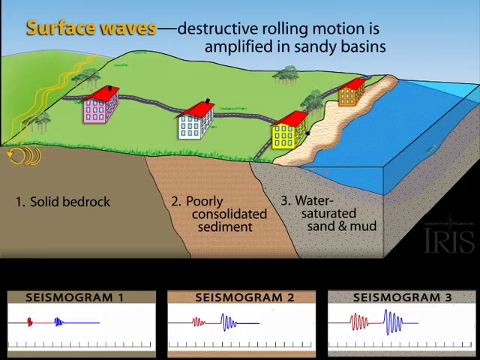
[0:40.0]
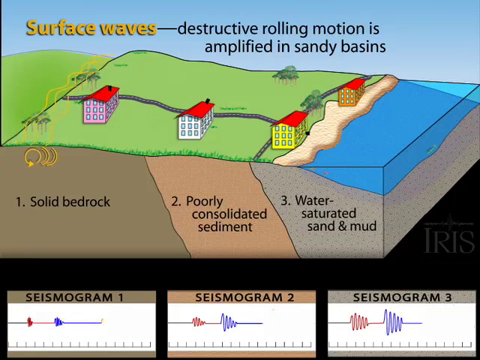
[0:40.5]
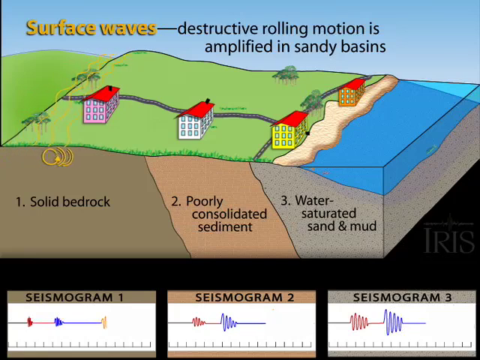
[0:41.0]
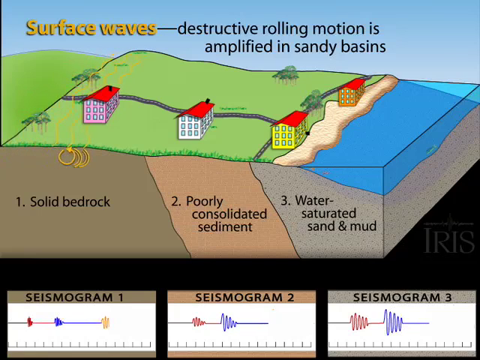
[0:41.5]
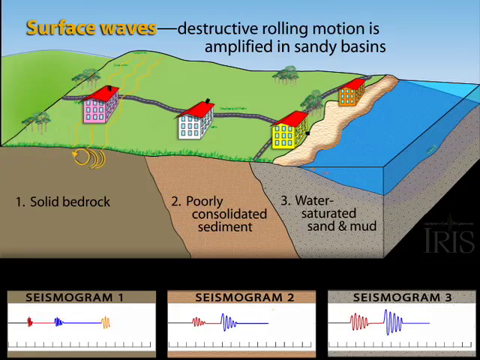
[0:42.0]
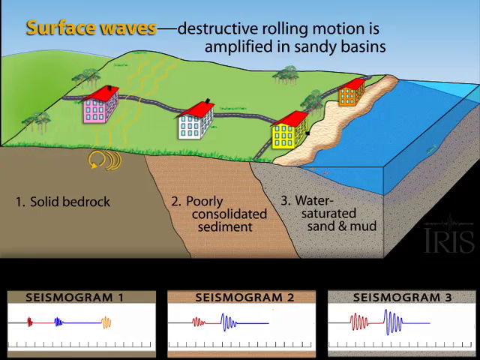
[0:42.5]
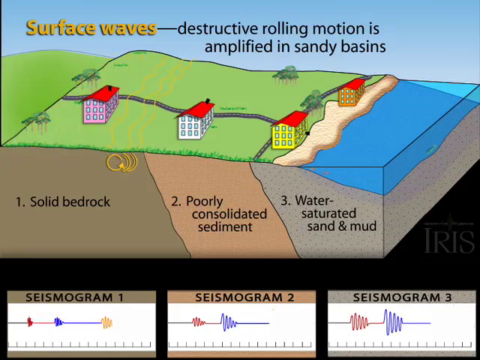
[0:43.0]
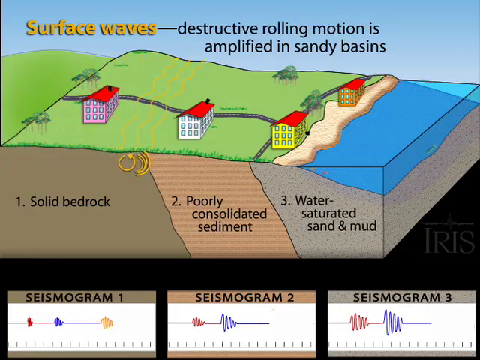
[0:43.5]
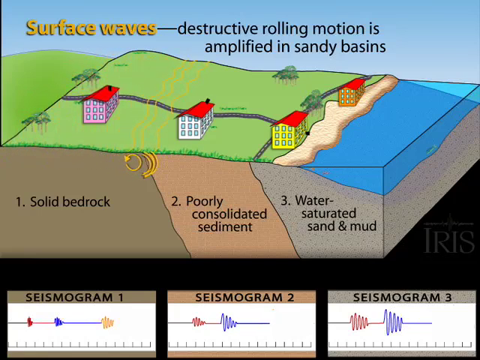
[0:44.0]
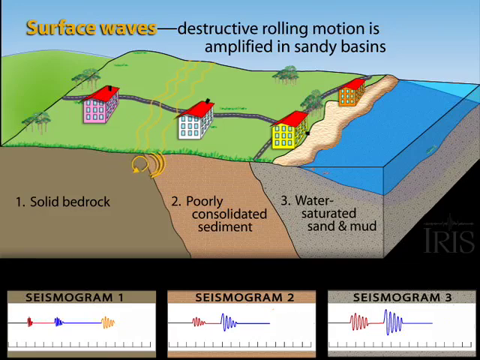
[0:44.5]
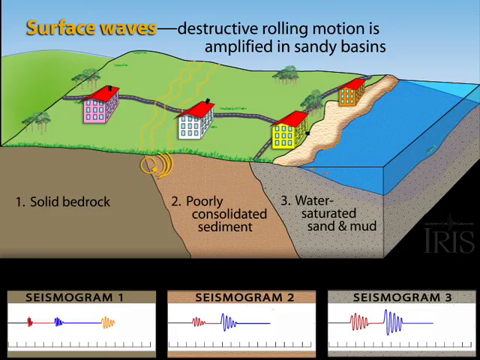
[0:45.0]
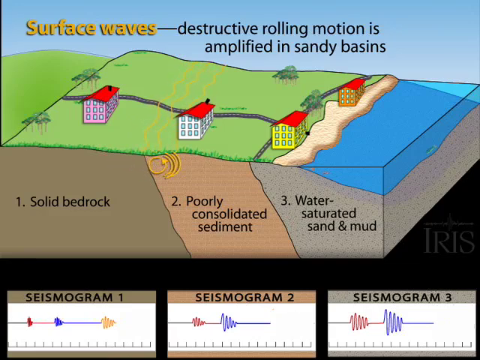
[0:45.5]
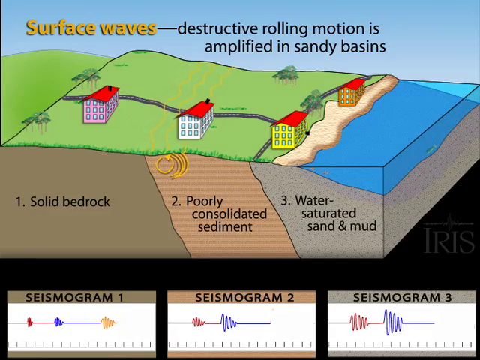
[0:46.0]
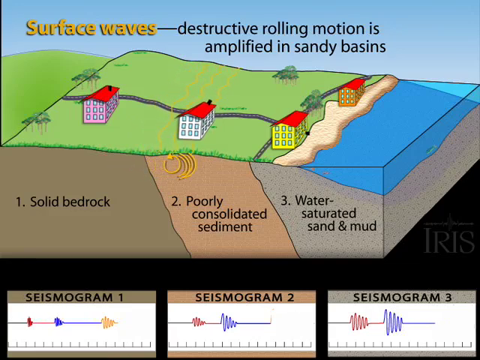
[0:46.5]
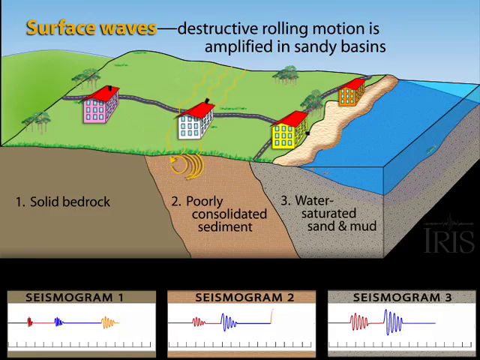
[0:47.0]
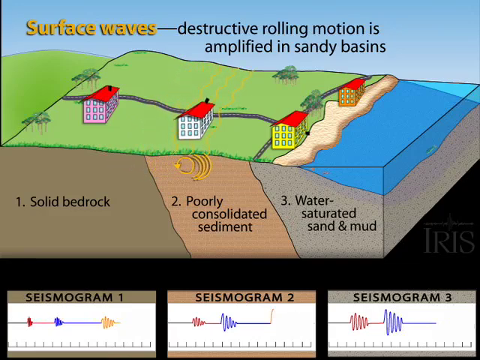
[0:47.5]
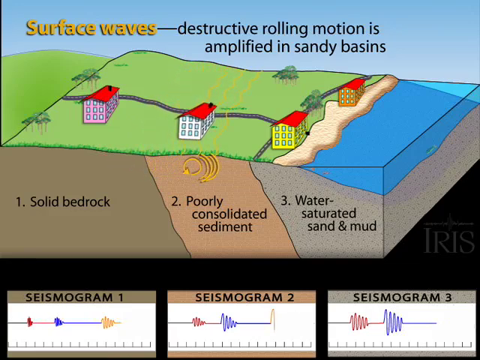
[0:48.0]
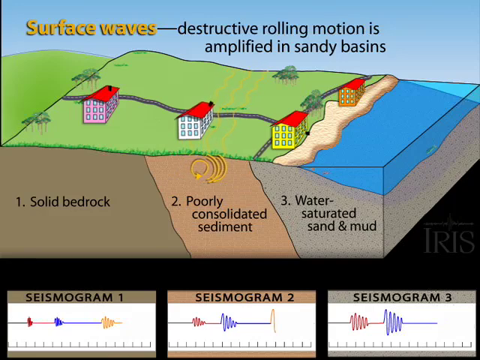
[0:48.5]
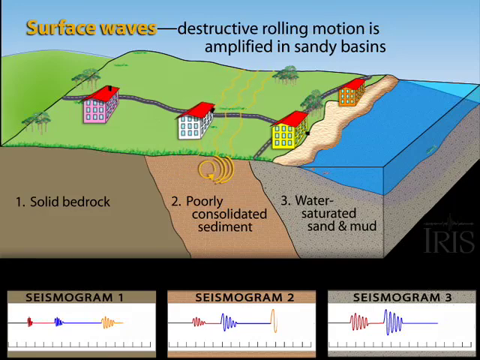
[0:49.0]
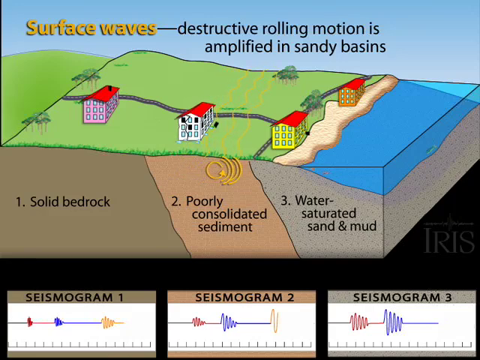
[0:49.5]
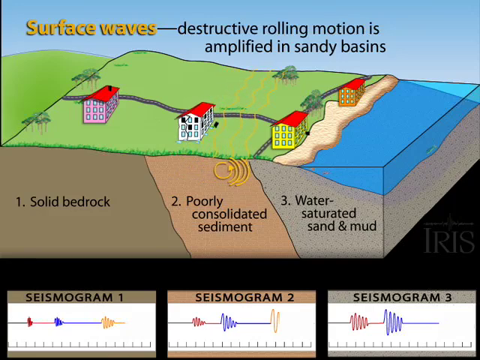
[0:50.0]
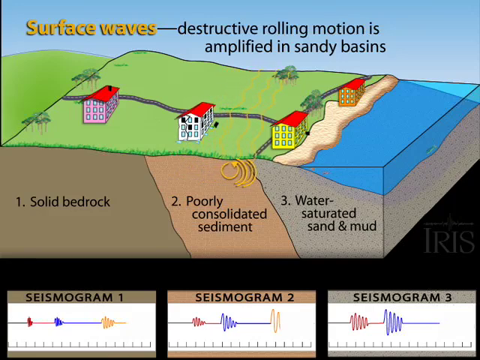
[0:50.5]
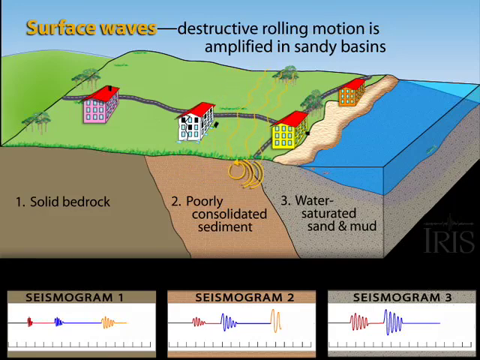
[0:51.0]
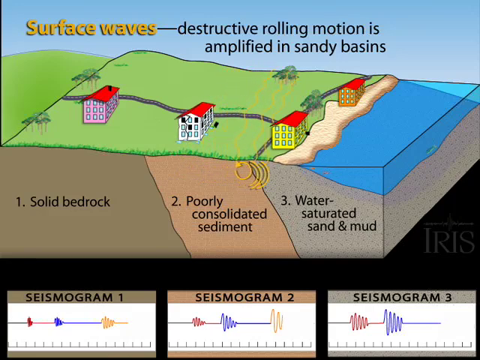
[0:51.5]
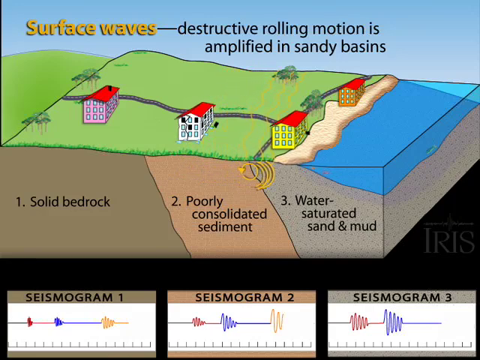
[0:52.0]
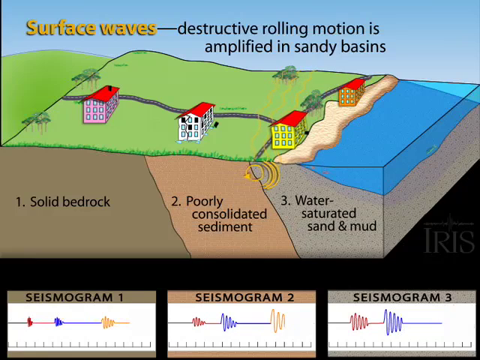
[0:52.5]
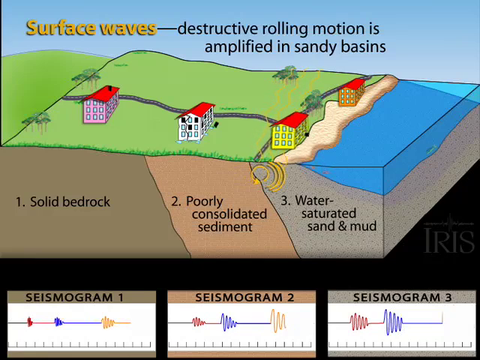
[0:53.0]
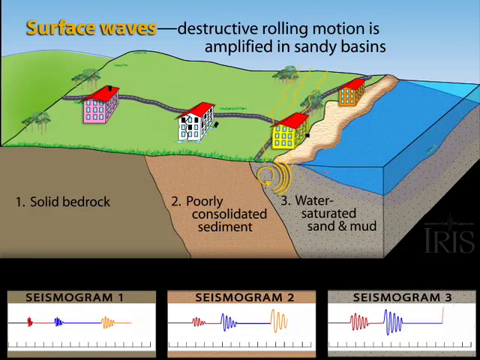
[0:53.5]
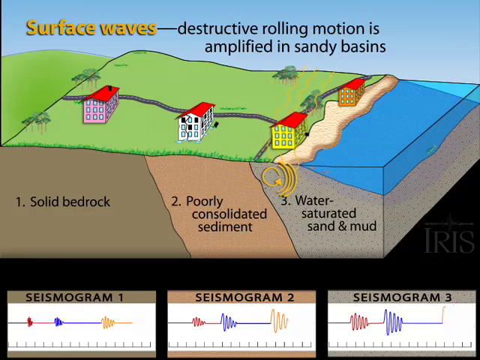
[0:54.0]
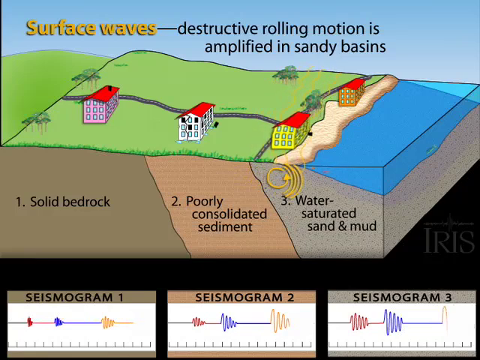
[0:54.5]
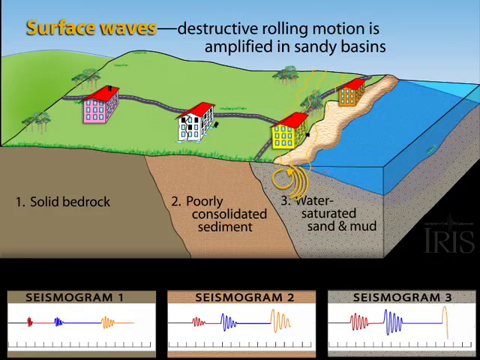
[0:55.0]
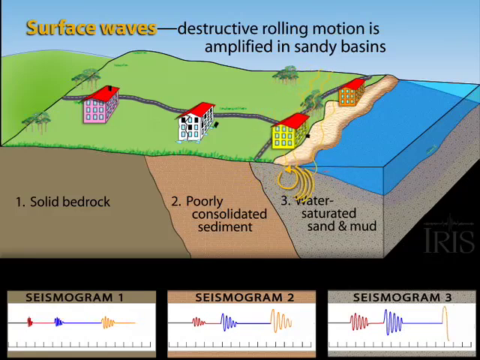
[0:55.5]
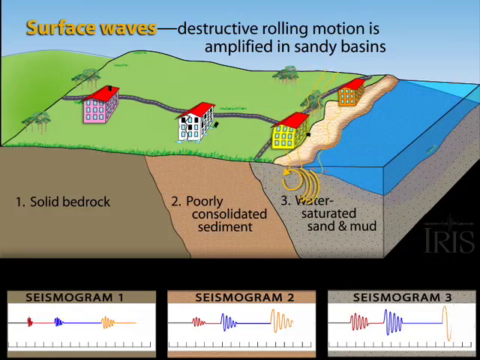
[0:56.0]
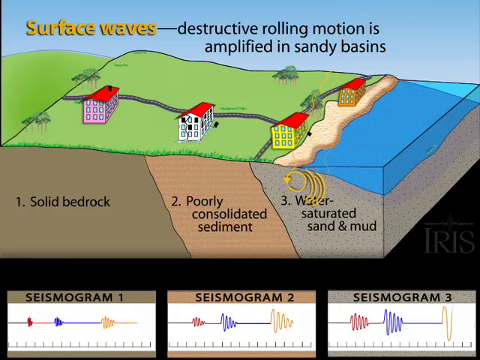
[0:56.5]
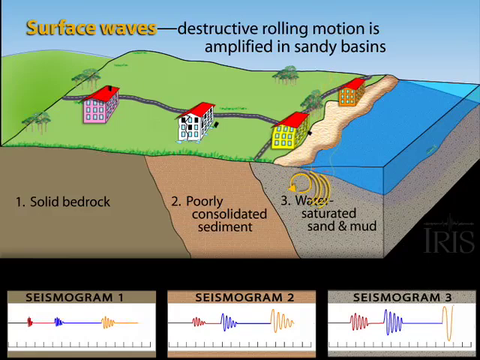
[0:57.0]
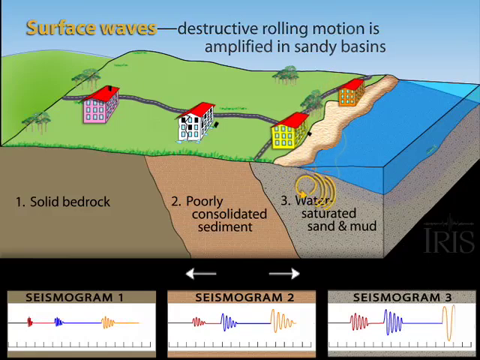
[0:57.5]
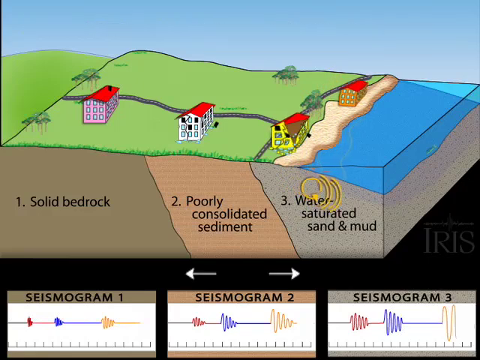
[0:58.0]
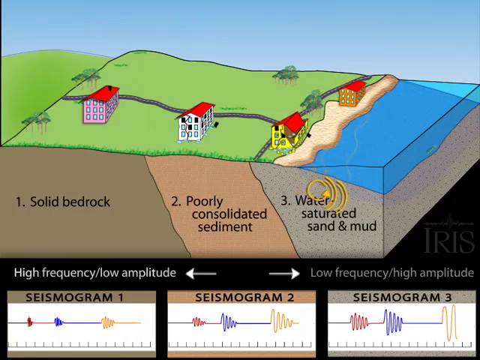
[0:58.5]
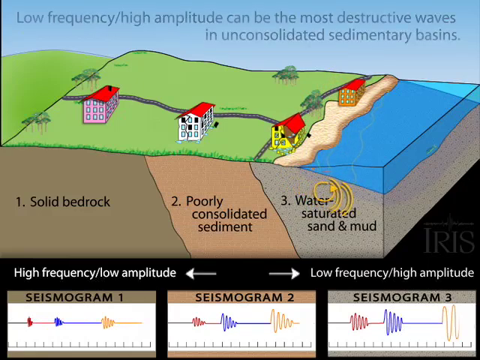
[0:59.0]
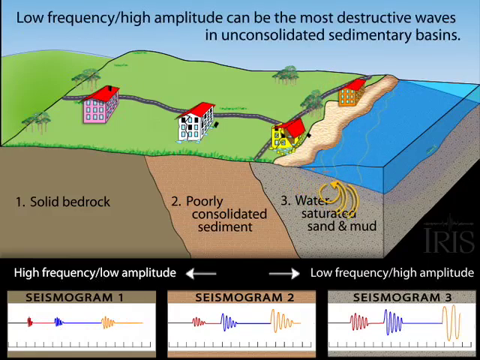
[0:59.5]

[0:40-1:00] The video is credited to iris. The building motion is exaggerated to emphasize the wave. Three buildings, engineered equally, are shown in a cutaway over solid bedrock, poorly consolidated sediment, and water-saturated sand and mud. P-waves, compressive waves from below, make the houses shake. Next come S-waves with a sideways shearing motion, and the houses on solid bedrock do very well. During the surface waves, the bedrock house is not affected, while the houses on bad soil move more. The houses on the ocean shore are completely ripped apart by the earthquake and fall down, showing the destructive rolling motion in sandy basins.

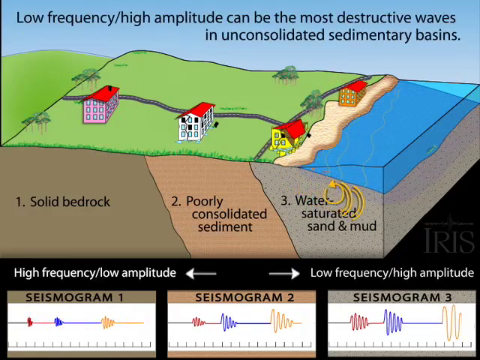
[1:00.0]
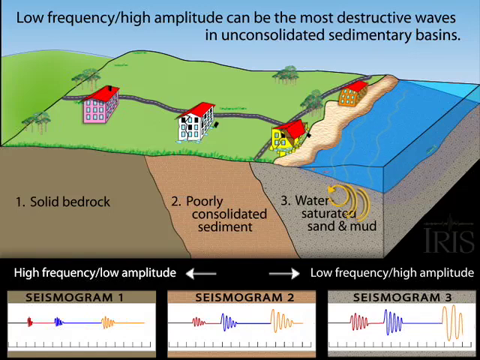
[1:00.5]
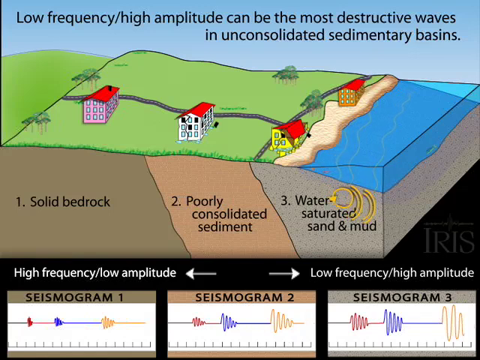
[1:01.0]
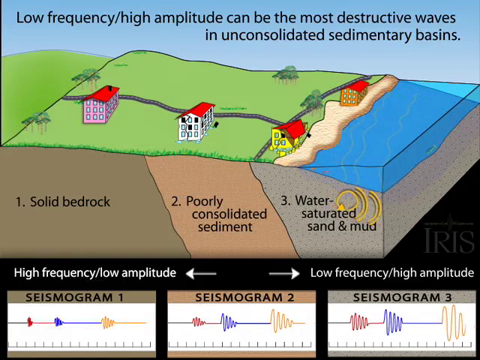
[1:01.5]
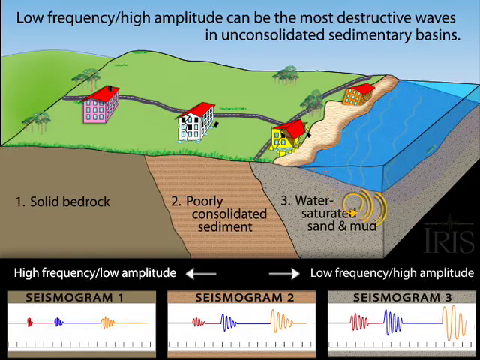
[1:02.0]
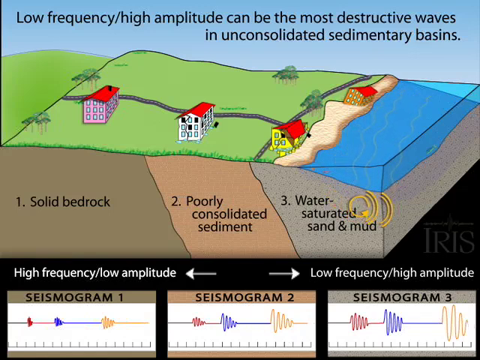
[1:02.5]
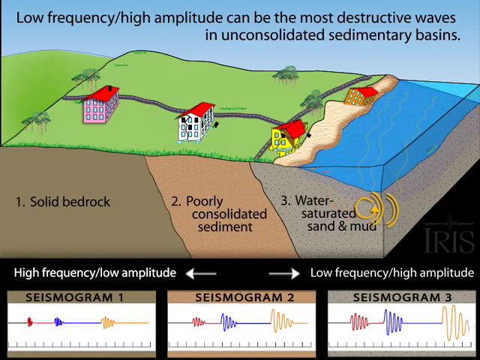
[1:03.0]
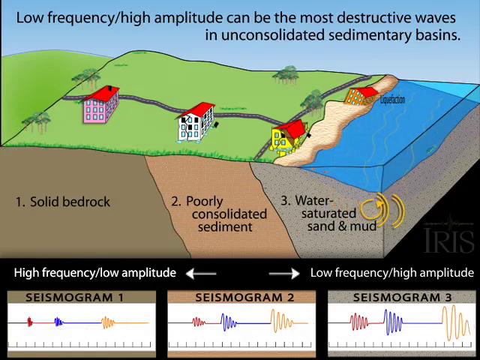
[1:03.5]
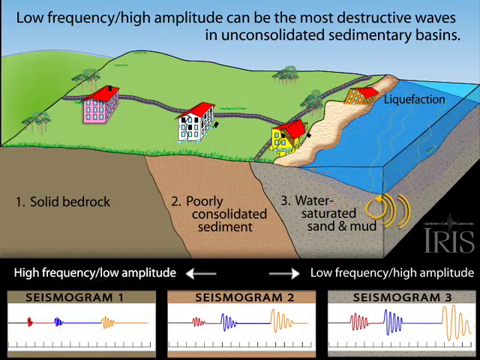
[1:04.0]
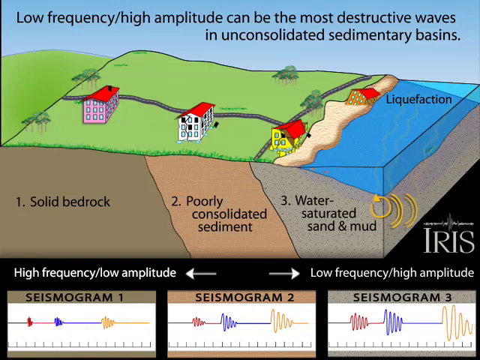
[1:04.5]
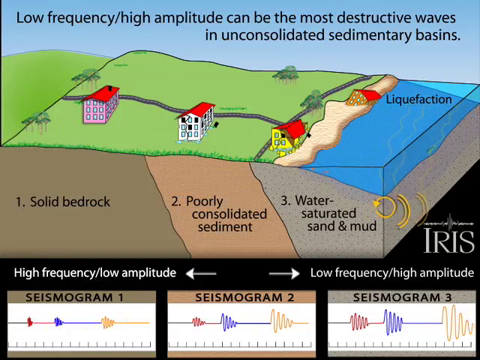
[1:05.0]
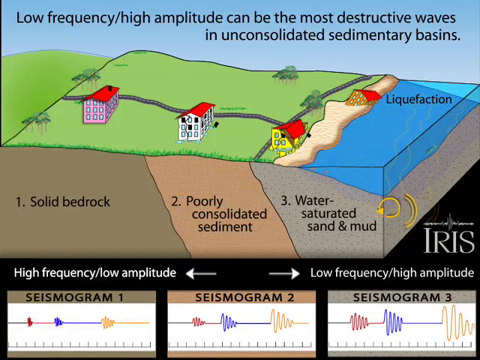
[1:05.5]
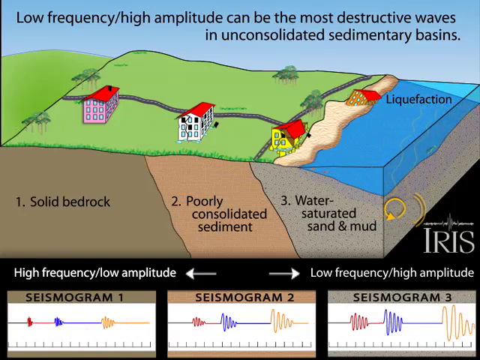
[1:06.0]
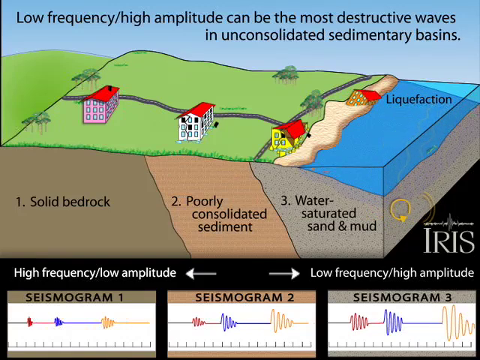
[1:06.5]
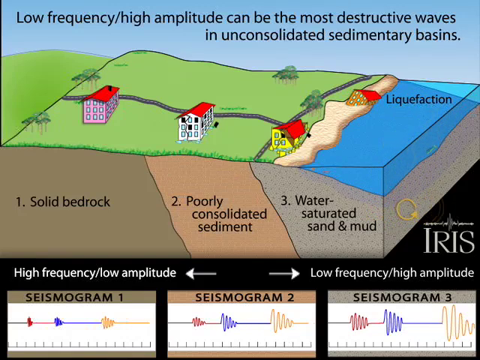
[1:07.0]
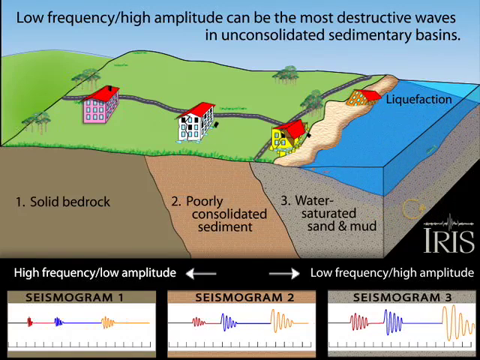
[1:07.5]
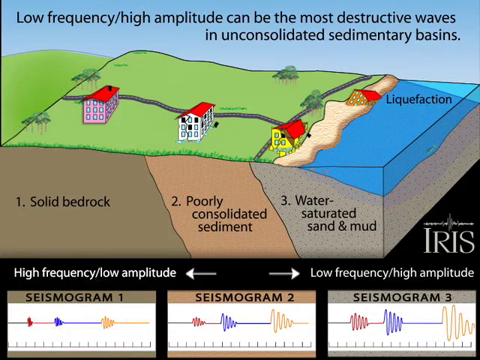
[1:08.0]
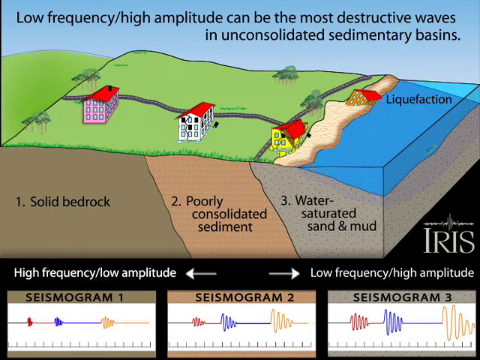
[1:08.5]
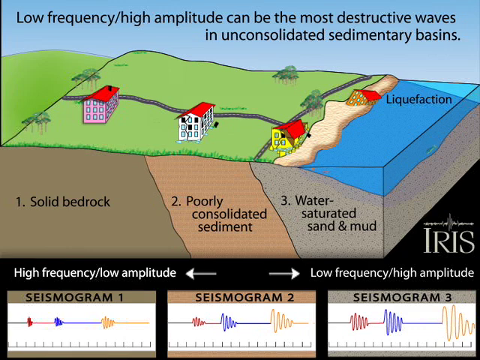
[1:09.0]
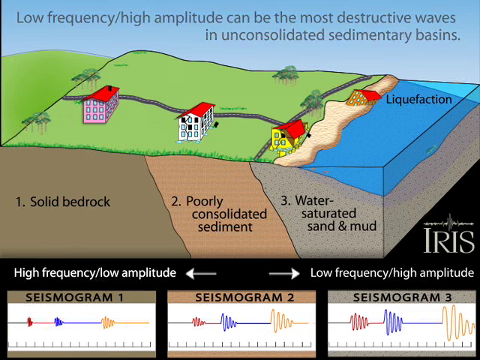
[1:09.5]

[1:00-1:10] The earthquake causes liquefaction: a house is completely sucked in by the moving sand and ends up in the ocean. The solid bedrock house does not, and the poorly consolidated sediment does not liquefy. High-frequency amplitude and low-frequency amplitude are shown, along with seismic one, two and three and the resulting damage. The colours change depending on what is being shown.